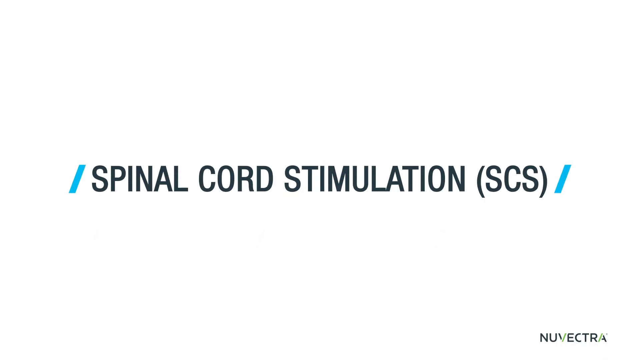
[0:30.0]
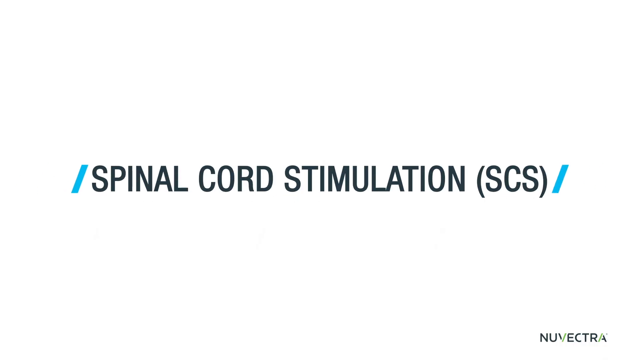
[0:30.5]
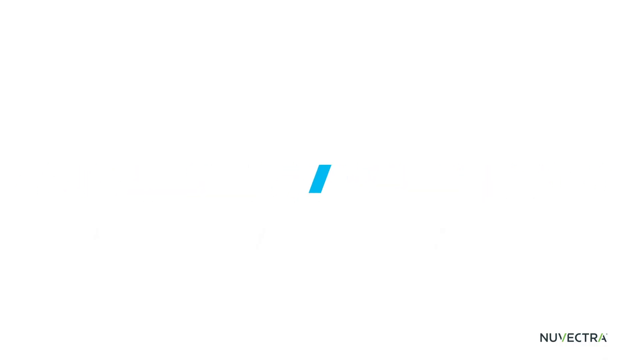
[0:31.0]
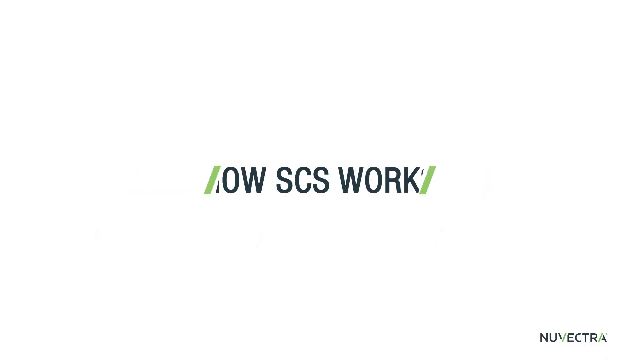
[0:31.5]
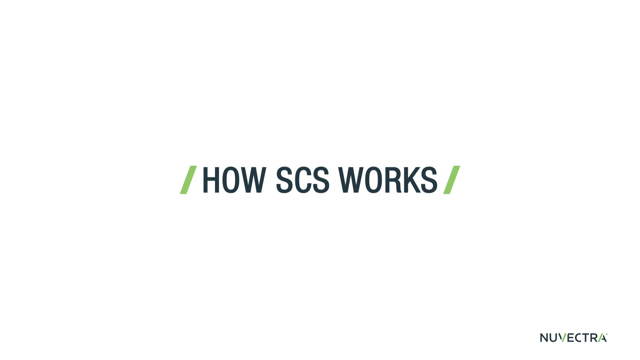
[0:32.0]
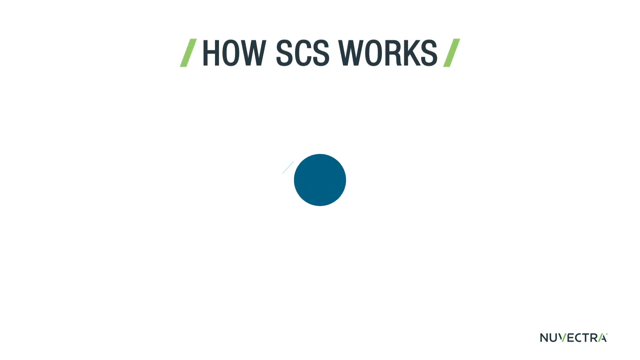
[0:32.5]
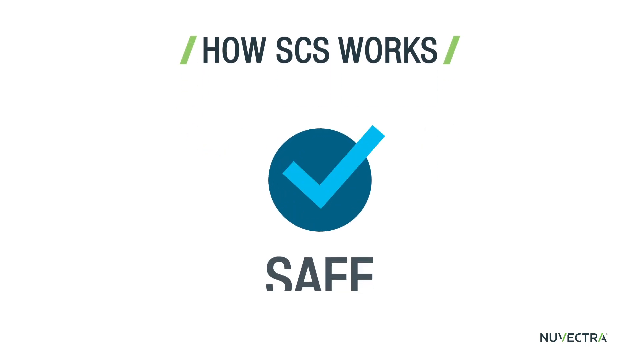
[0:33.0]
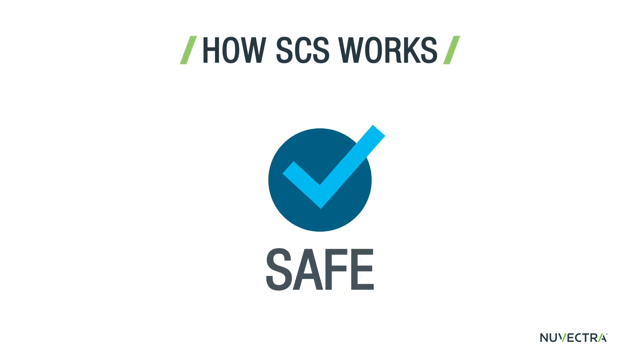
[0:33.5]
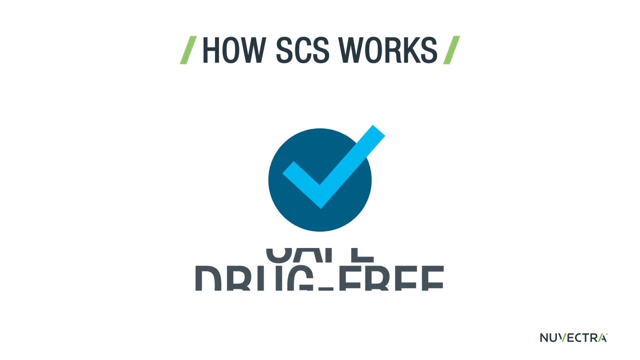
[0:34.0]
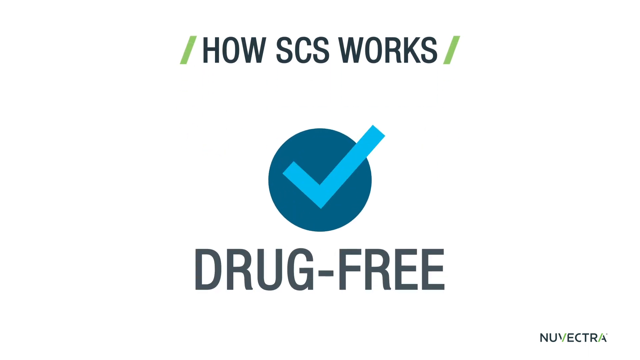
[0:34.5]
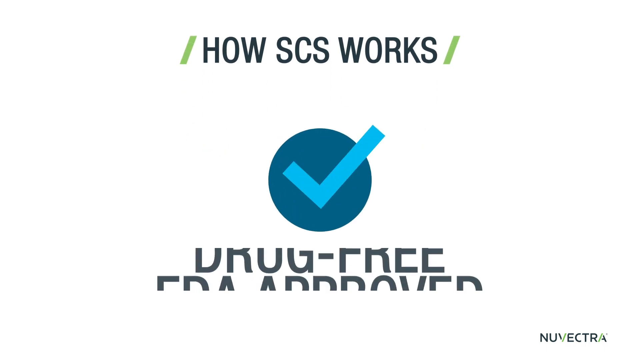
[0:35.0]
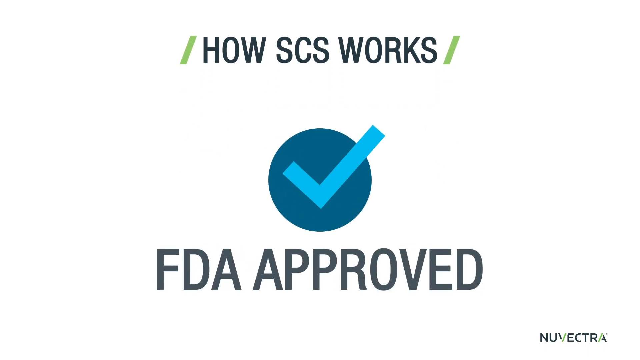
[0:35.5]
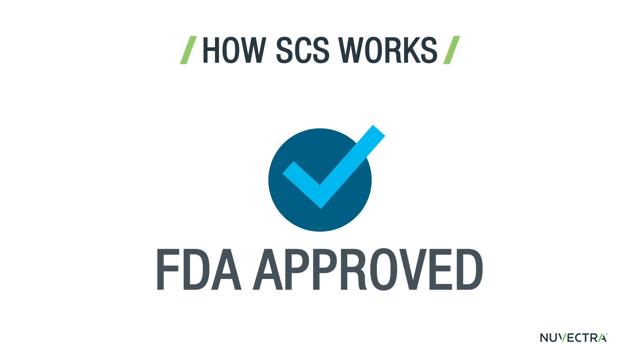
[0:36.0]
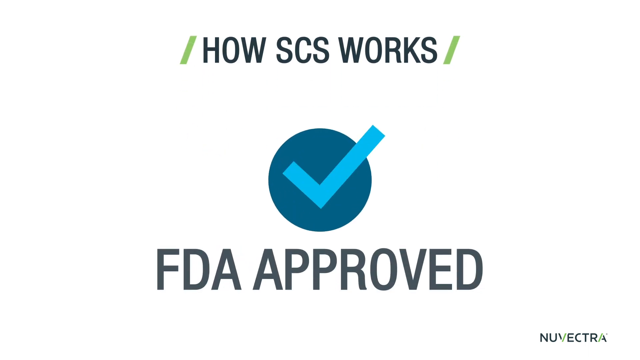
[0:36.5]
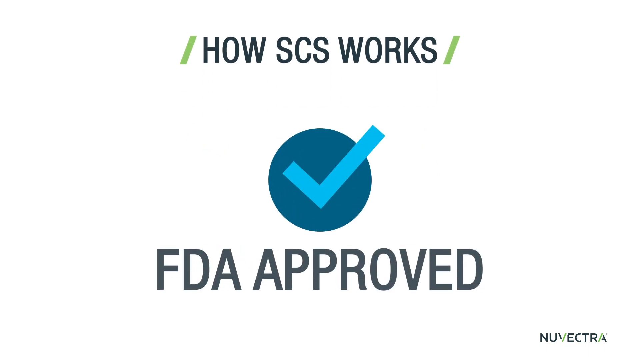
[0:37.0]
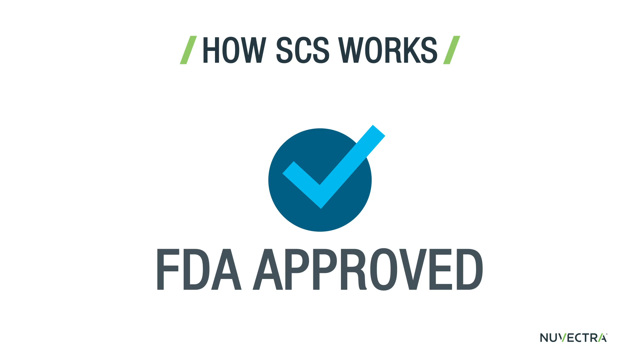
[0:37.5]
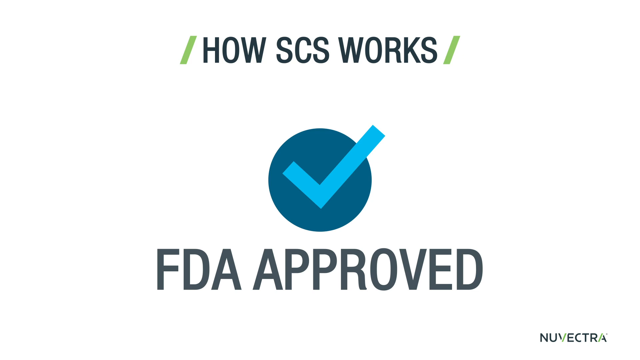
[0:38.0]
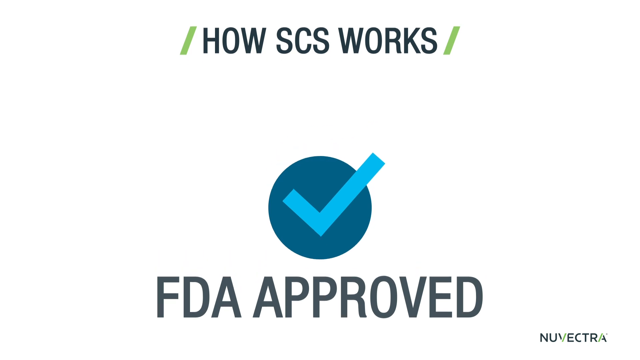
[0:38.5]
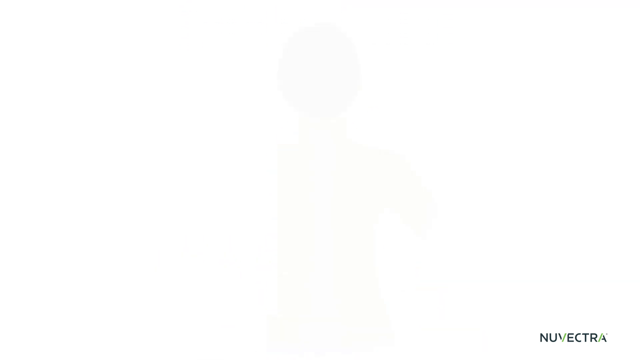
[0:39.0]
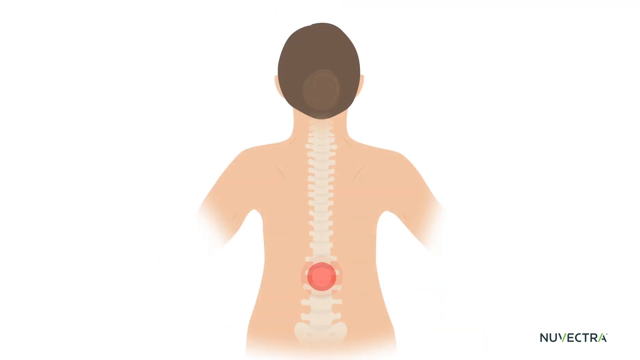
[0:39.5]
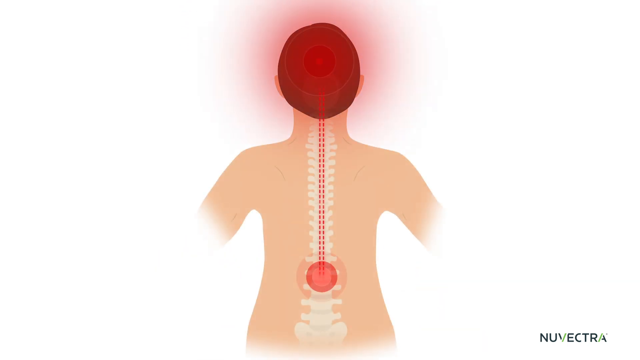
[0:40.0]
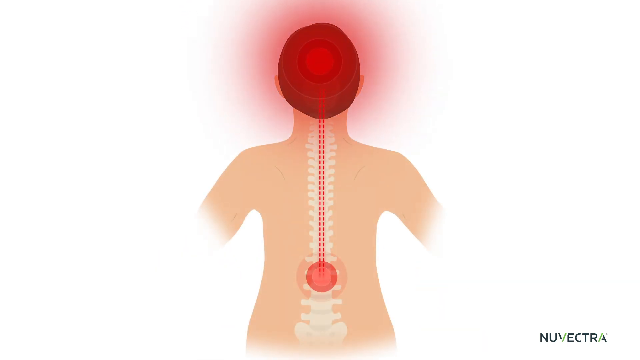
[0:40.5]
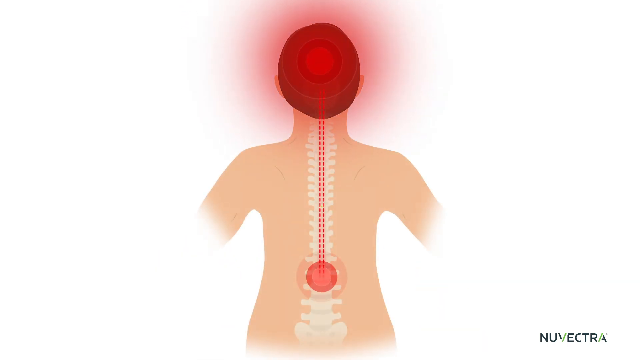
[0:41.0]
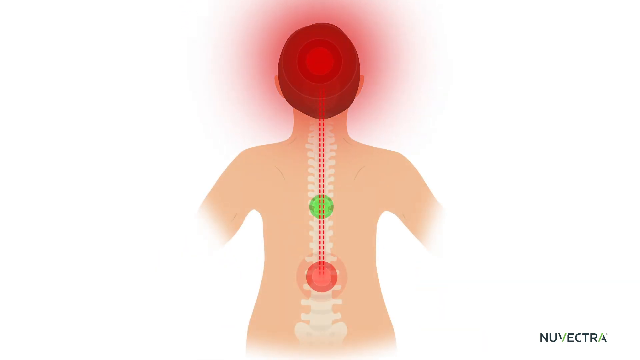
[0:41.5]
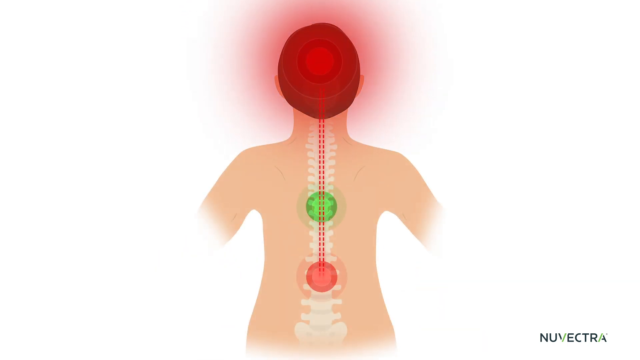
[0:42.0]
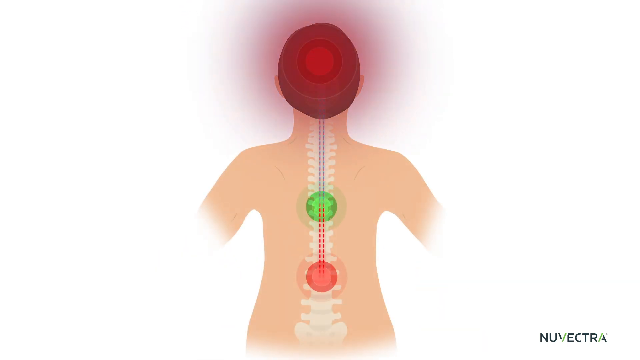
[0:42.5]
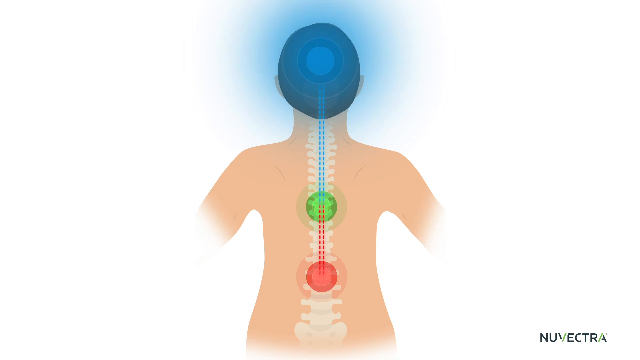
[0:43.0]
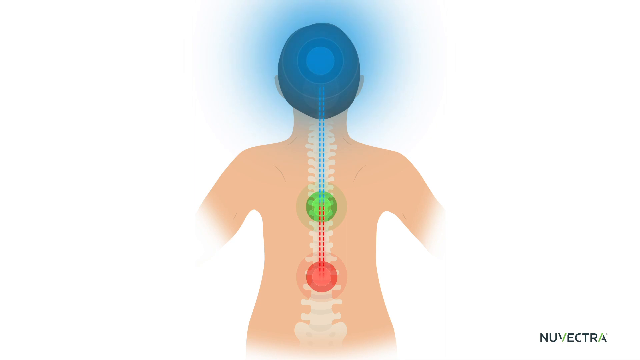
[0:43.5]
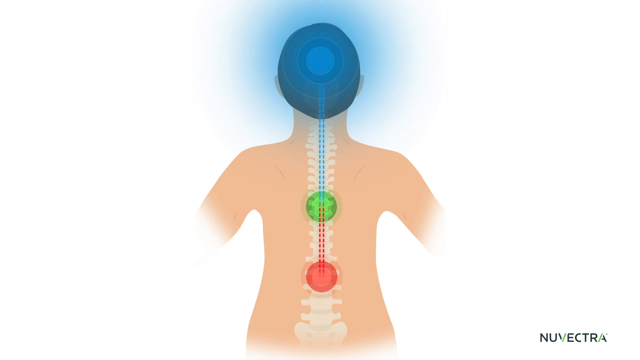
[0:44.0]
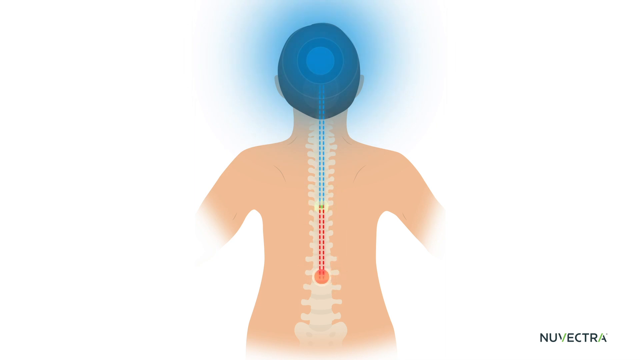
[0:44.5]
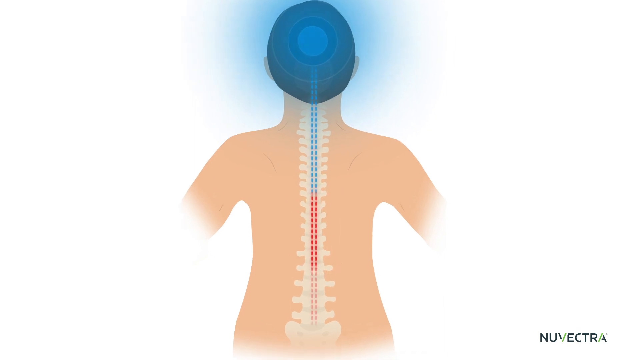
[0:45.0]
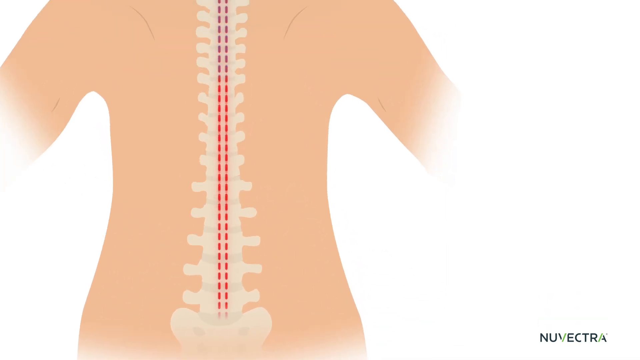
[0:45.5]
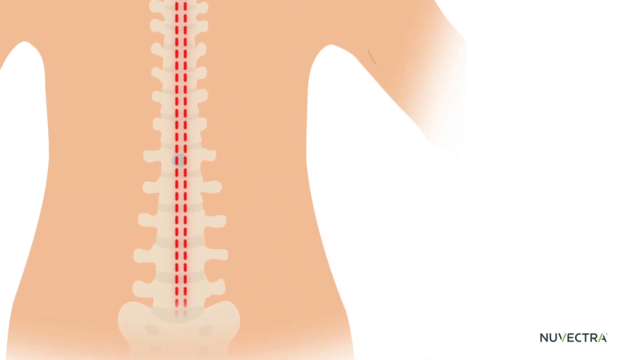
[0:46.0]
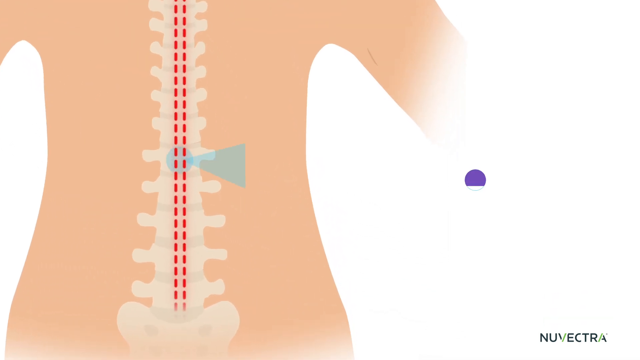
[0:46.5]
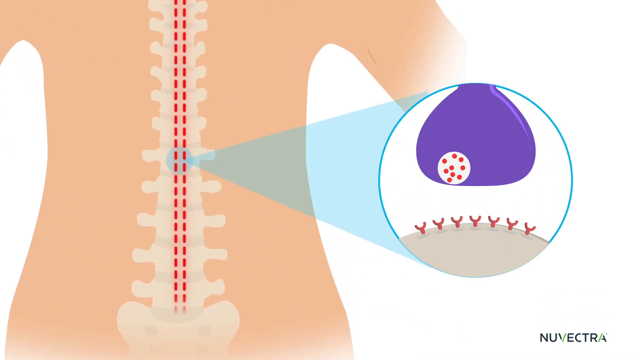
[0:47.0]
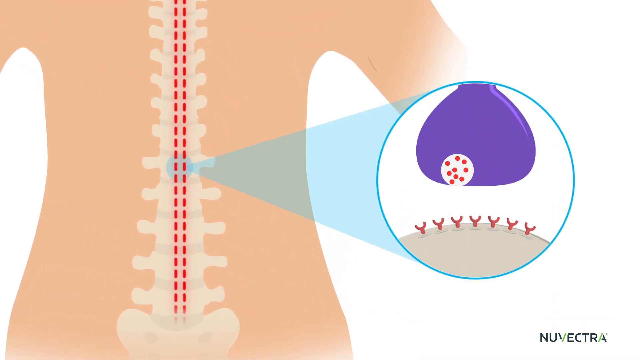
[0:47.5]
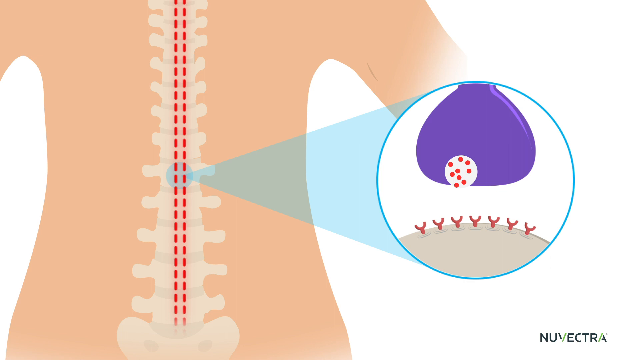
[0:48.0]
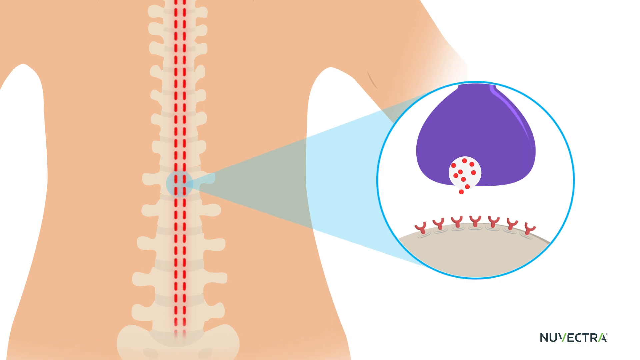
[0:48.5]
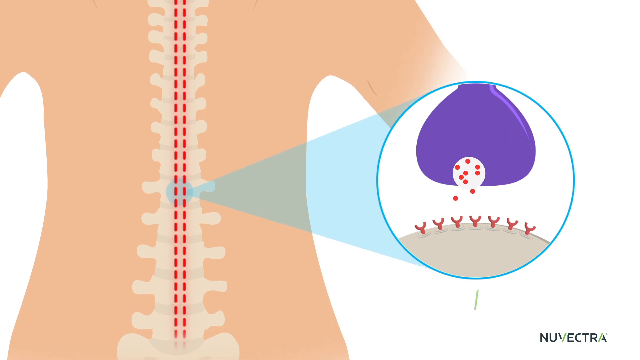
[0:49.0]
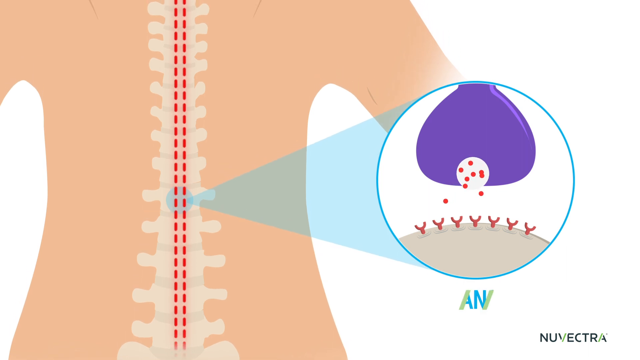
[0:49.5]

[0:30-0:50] The text closes and new black text reading "how SCS works" appears. Below it is a dark blue circle with a light blue checkmark and the text "drug-free FDA approved." Still on a white background, an animated design of a human back appears, with the spine shown in the center of the back. A red circle appears toward the bottom of the spine, another red circle covers the back of the person's head, and two dotted red lines travel upward toward the back of the head. A green circle appears in the middle of the spine, and the back of the head turns blue. The camera zooms in on the lower back area. A circle on the right-hand side shows a moving cell with red dots traveling downward, and blue text reads "neurotransmitters."